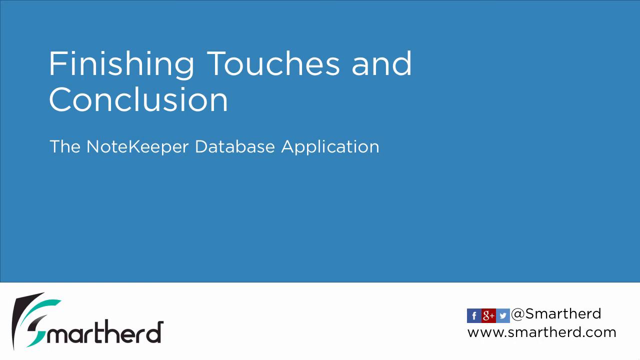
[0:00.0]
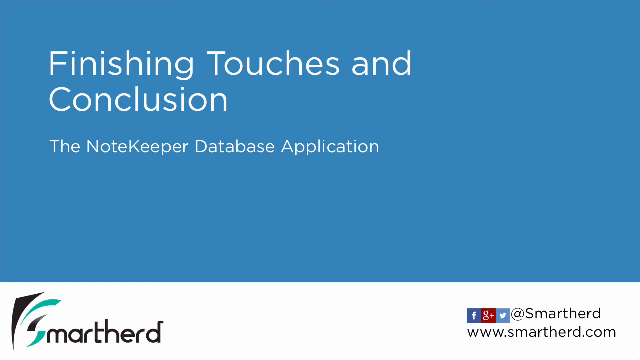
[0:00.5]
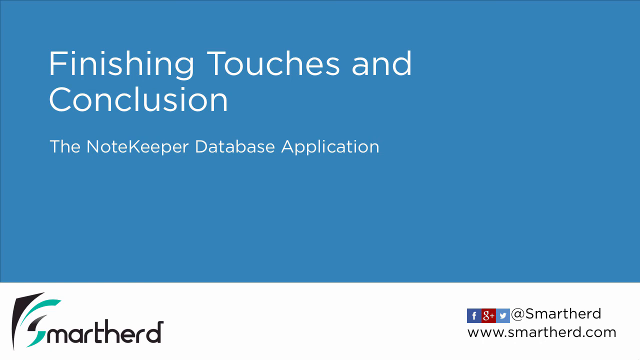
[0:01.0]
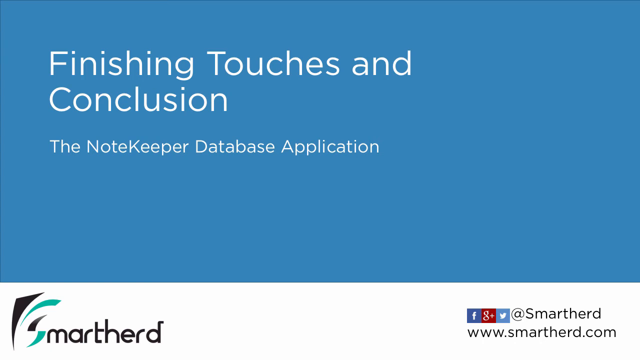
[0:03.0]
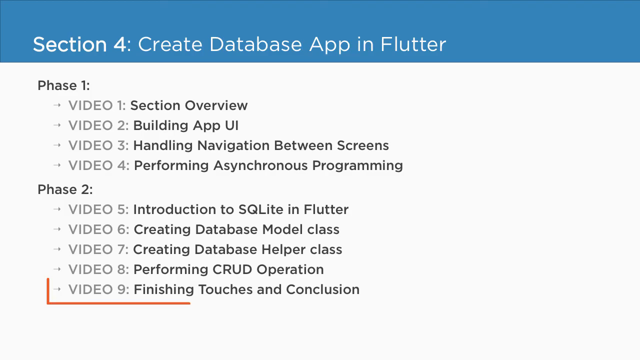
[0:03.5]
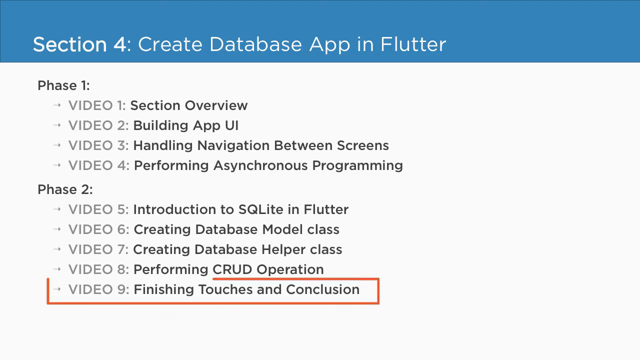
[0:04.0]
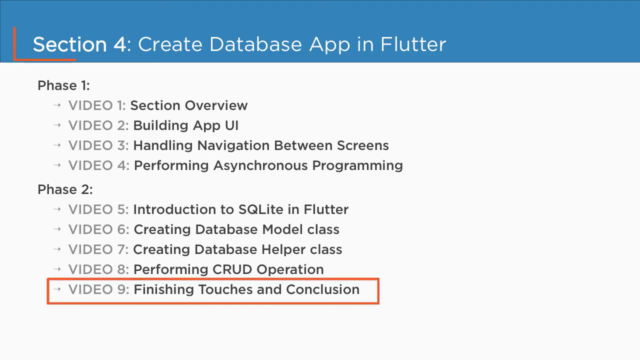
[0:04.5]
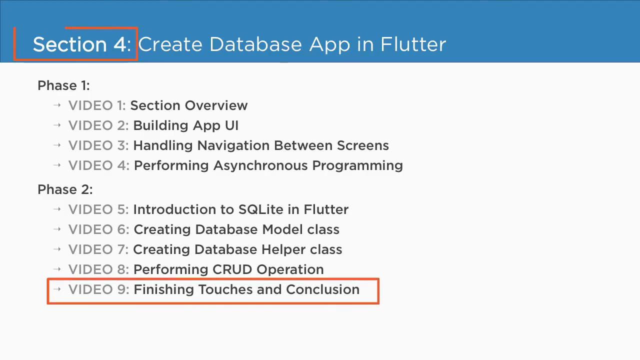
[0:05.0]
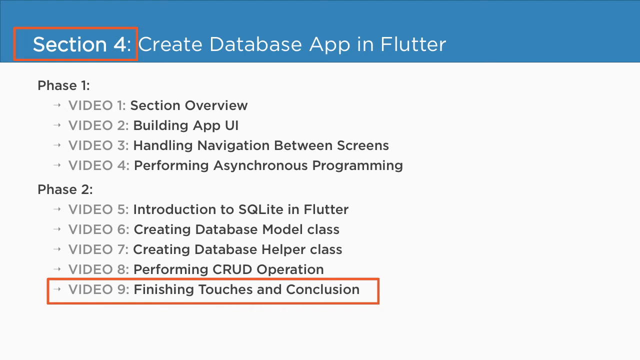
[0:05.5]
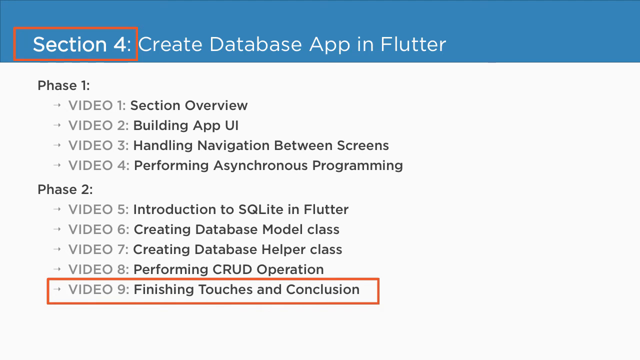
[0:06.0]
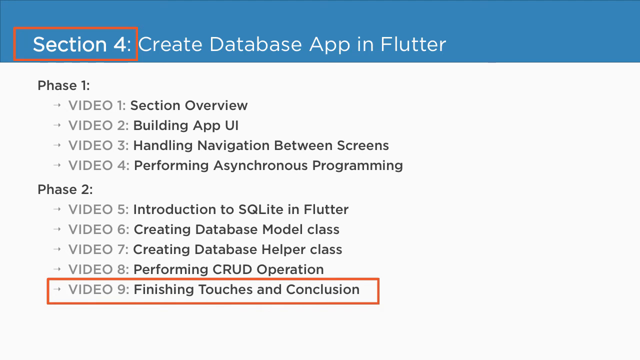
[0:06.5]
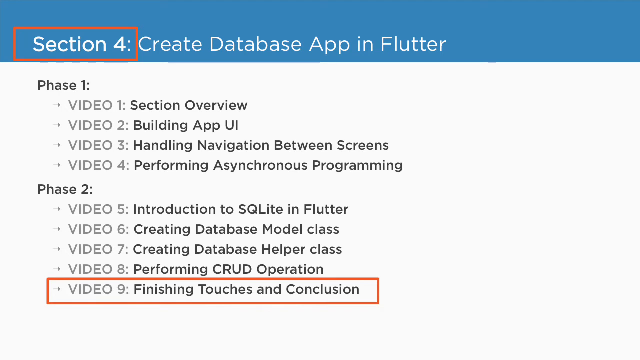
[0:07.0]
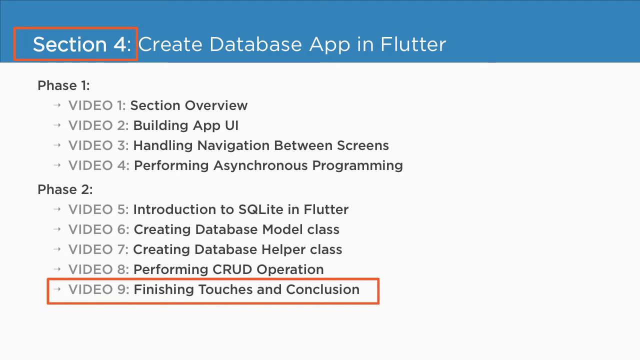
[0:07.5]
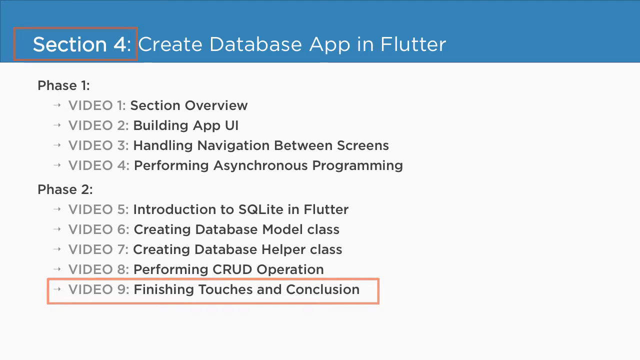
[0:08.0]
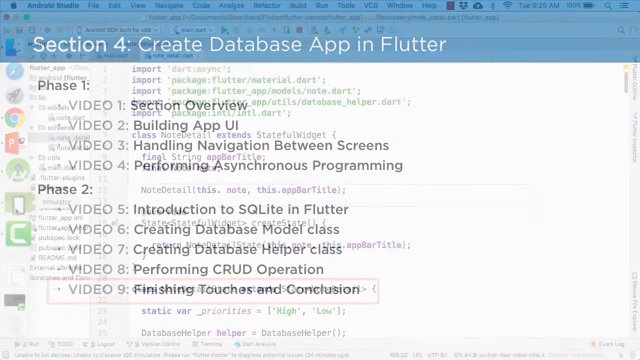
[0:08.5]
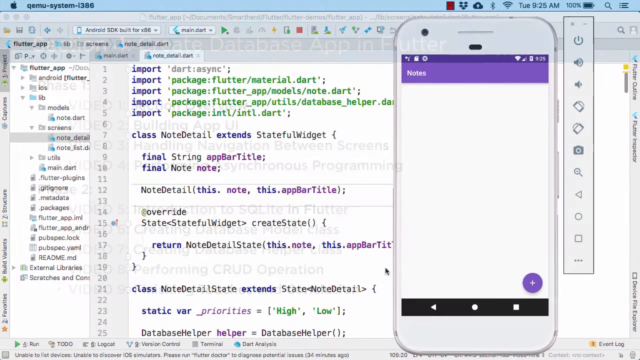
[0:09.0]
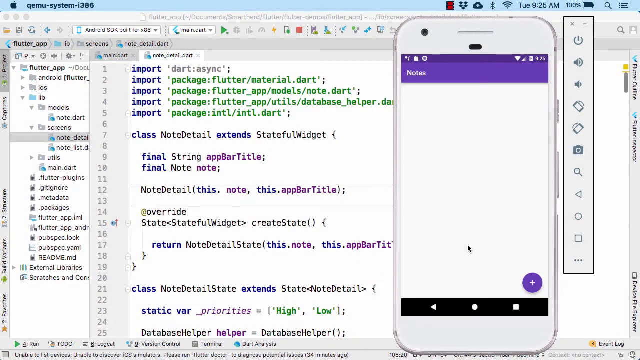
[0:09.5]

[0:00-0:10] The video seems to be a slideshow or video presentation about an app that someone apparently created, something like a smartphone app. A slide reads "finishing touches and conclusion," and right below it is what may be the name of the app, "NoteKeeper database application." The slide shows section four, phase two, video nine. When the presenter opens what appears to be the video preview, a phone preview appears along with some code; on the left-hand side, behind it, is a coding IDE.